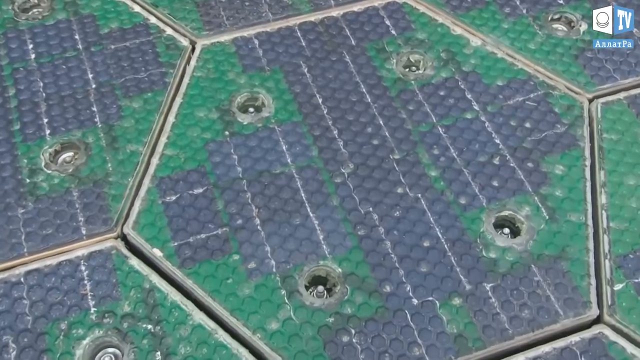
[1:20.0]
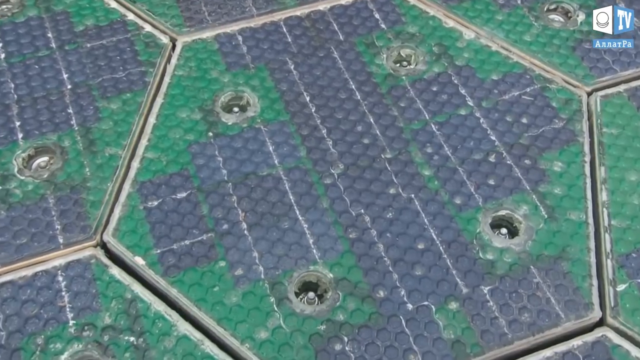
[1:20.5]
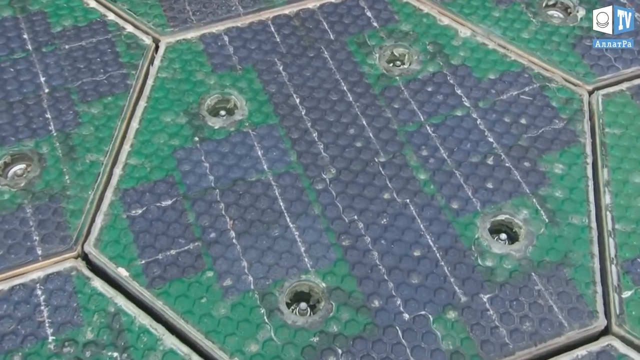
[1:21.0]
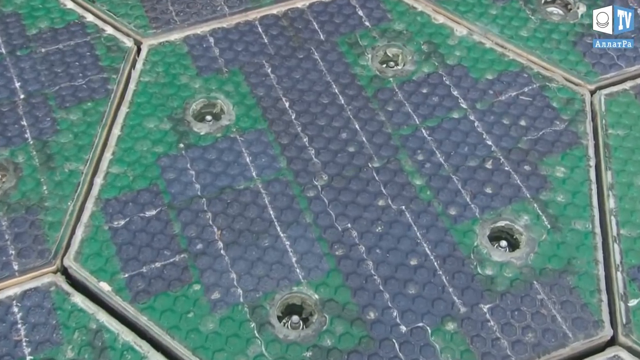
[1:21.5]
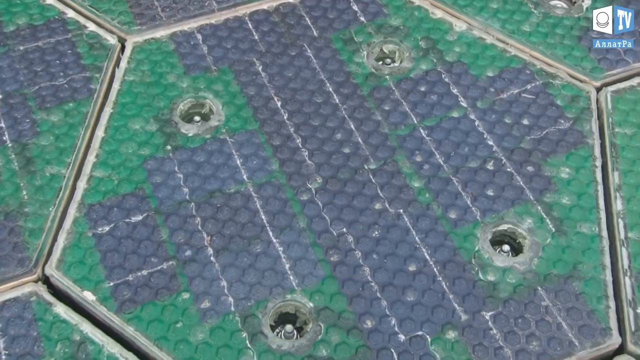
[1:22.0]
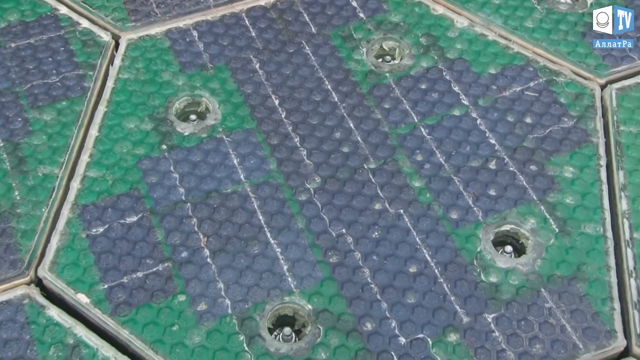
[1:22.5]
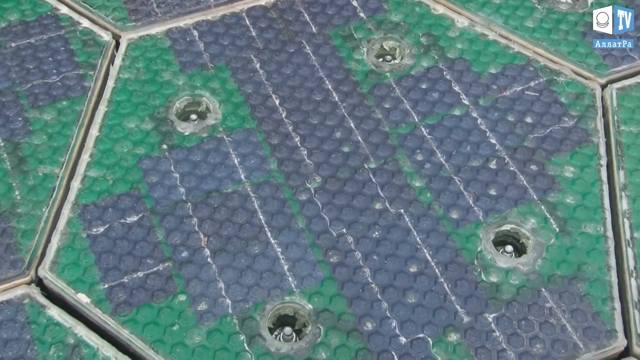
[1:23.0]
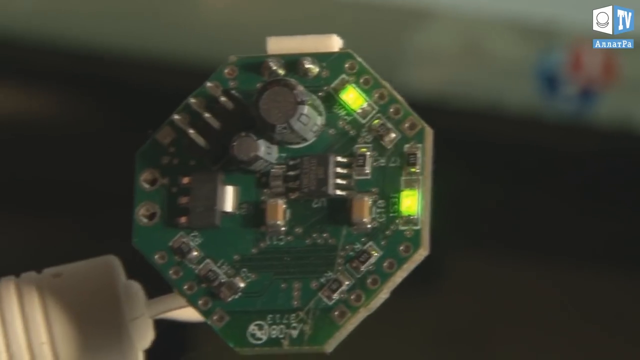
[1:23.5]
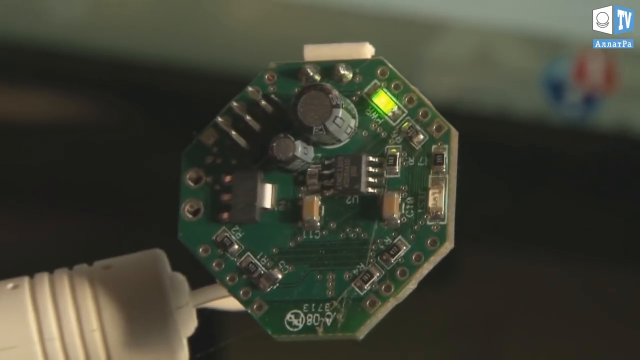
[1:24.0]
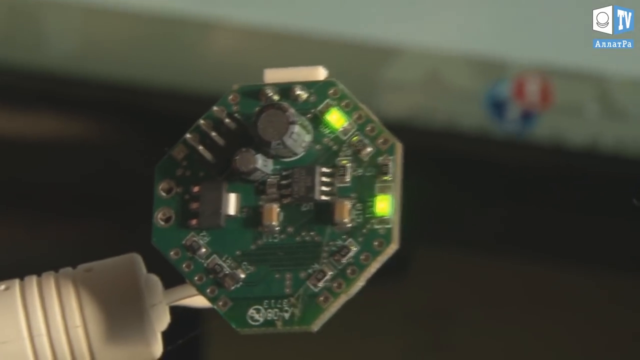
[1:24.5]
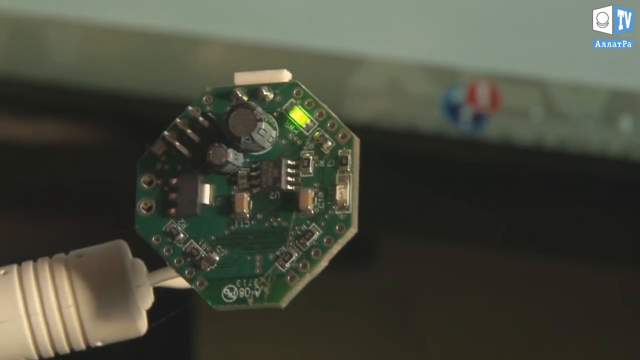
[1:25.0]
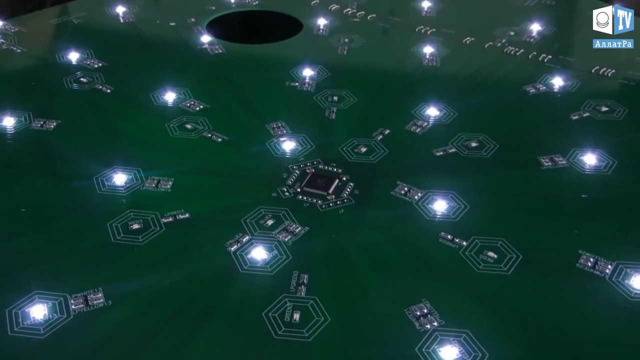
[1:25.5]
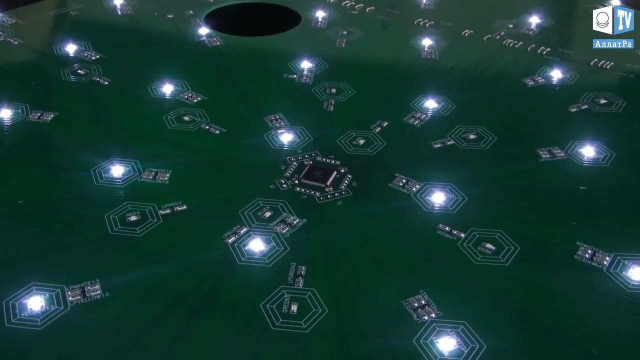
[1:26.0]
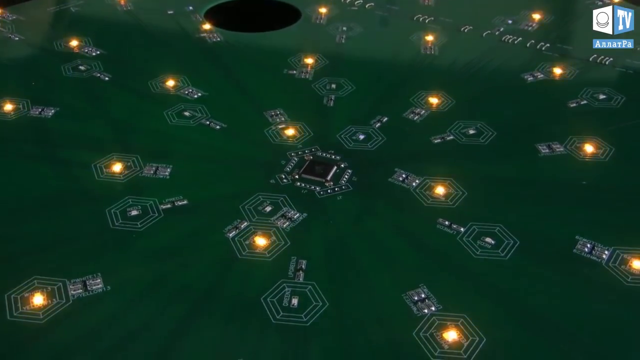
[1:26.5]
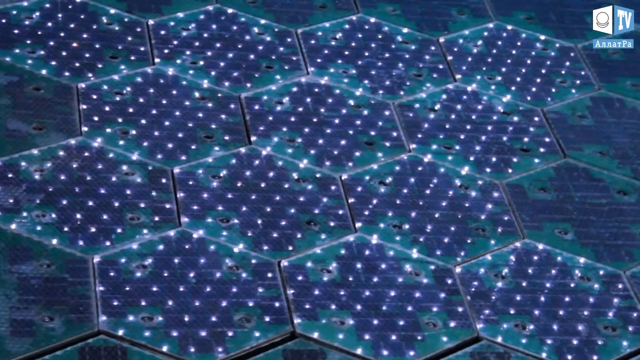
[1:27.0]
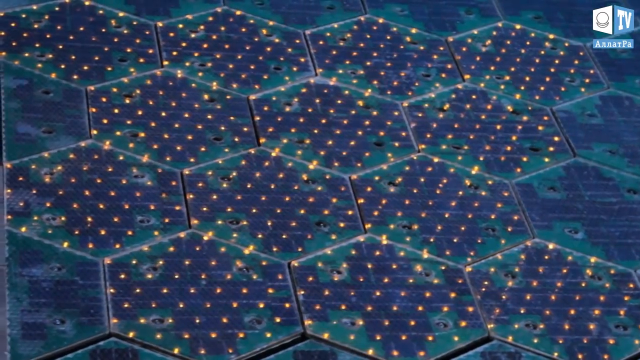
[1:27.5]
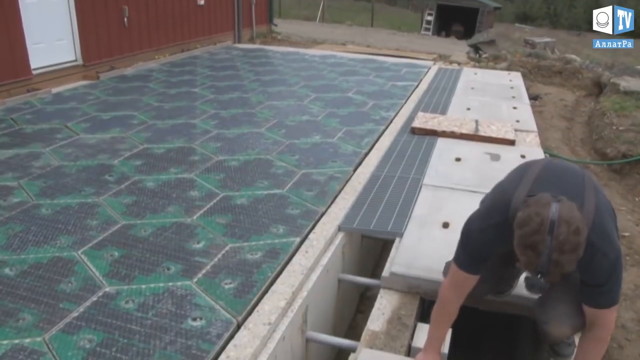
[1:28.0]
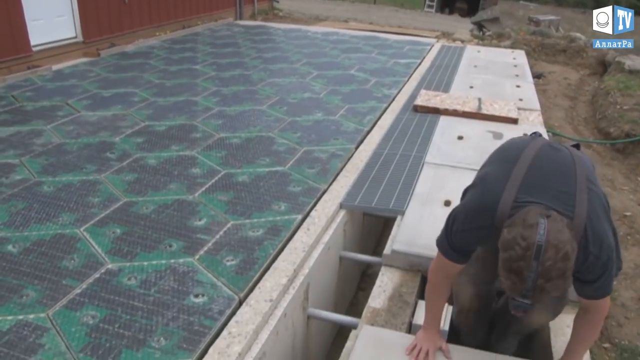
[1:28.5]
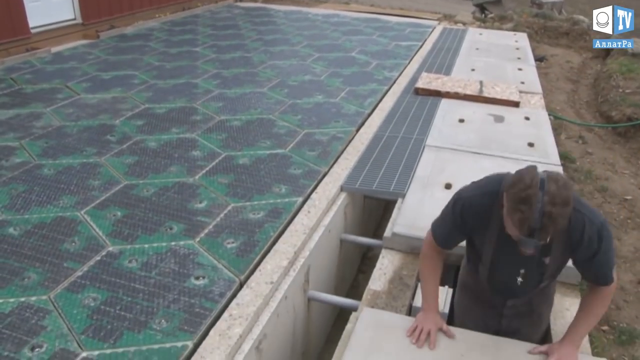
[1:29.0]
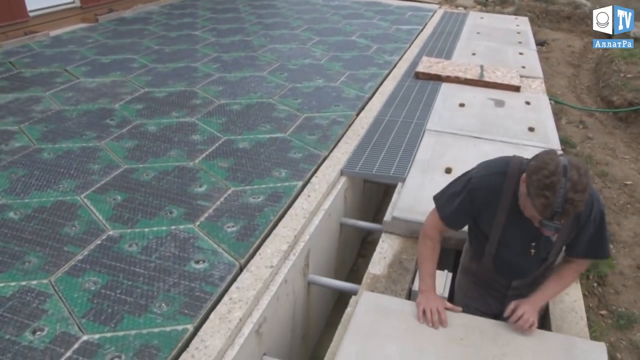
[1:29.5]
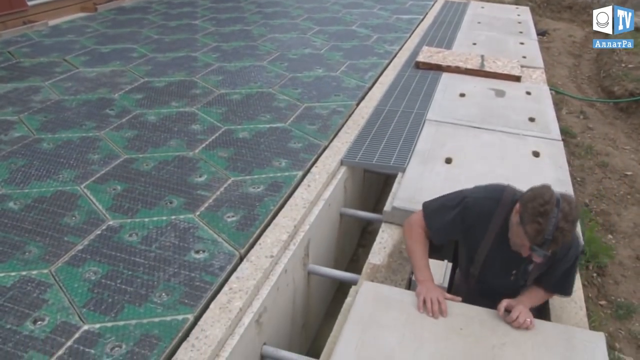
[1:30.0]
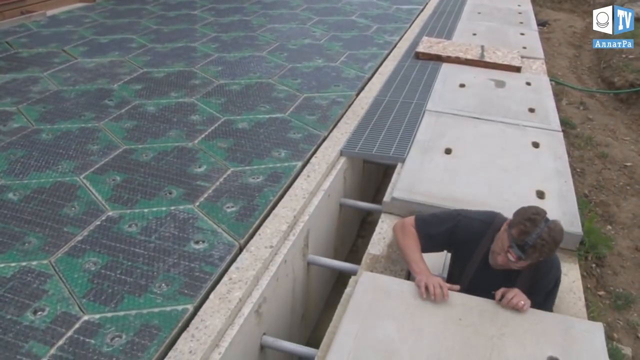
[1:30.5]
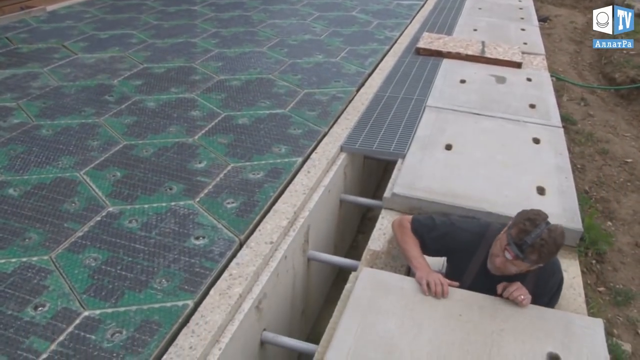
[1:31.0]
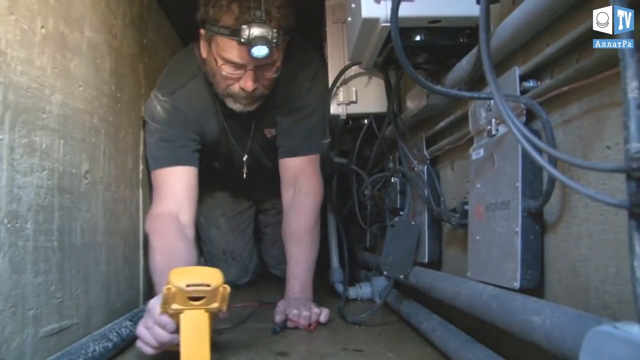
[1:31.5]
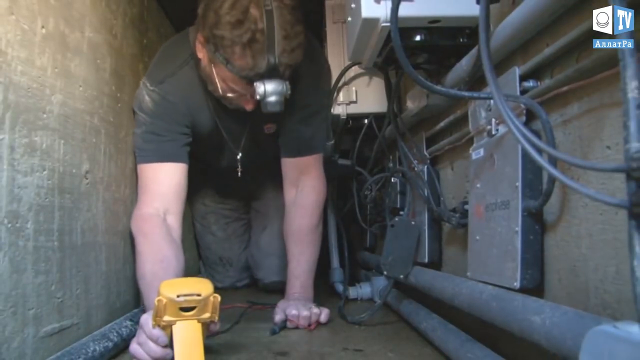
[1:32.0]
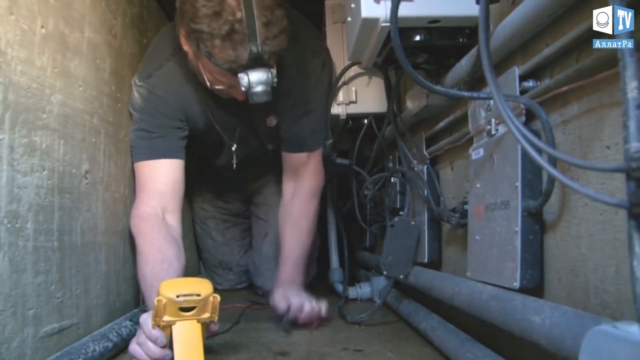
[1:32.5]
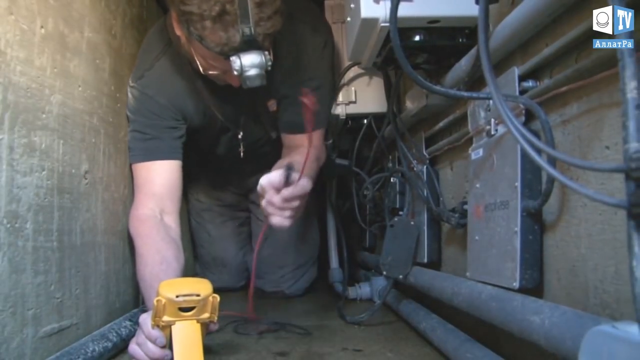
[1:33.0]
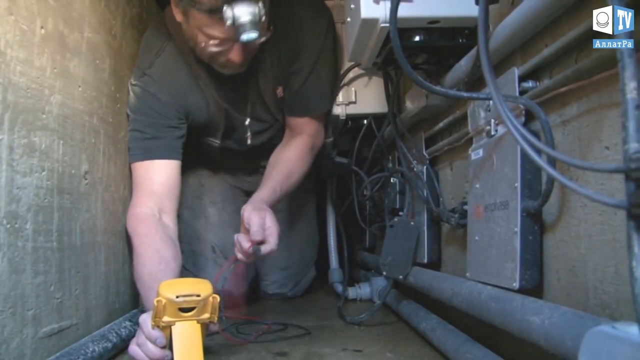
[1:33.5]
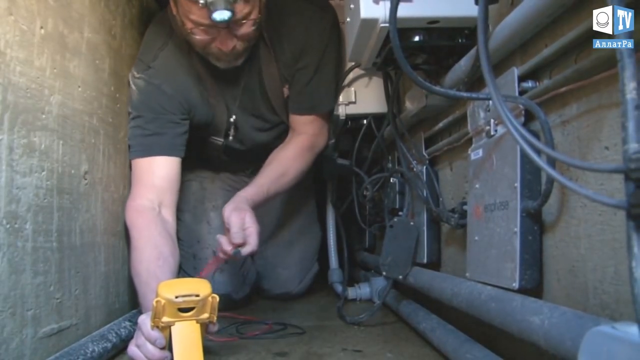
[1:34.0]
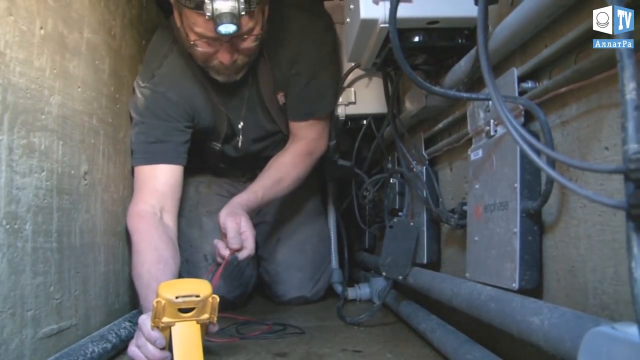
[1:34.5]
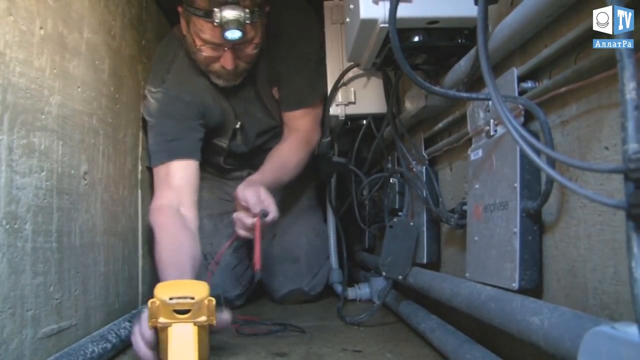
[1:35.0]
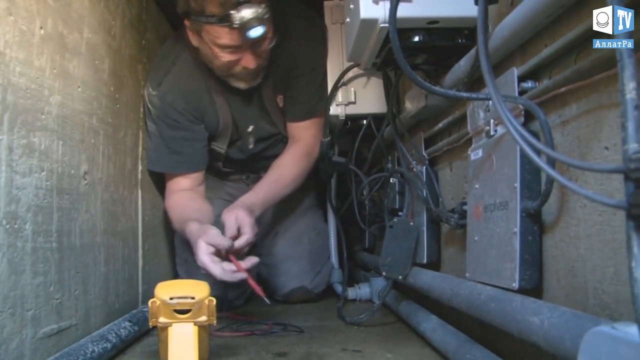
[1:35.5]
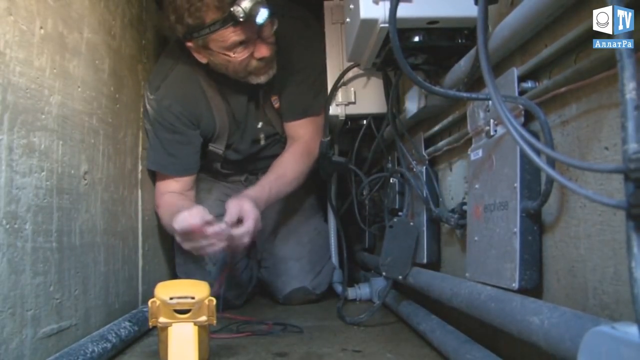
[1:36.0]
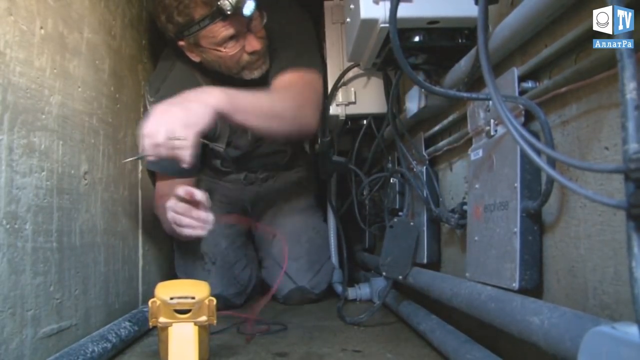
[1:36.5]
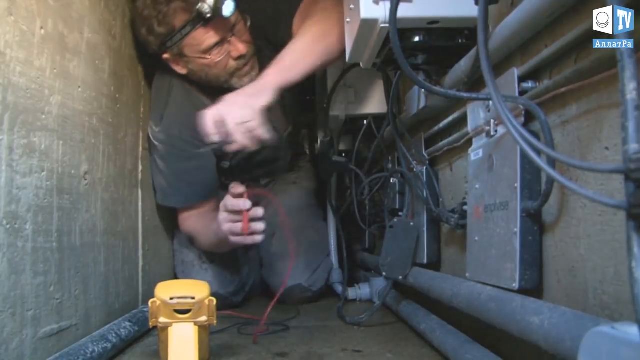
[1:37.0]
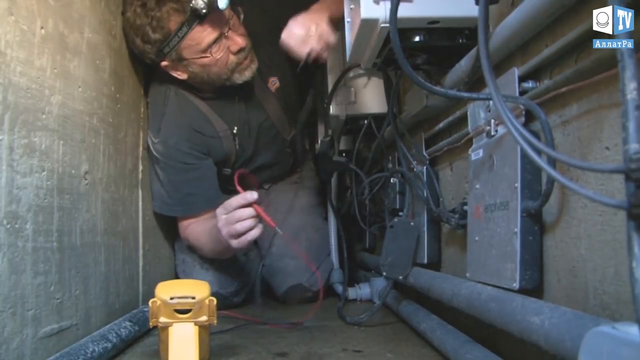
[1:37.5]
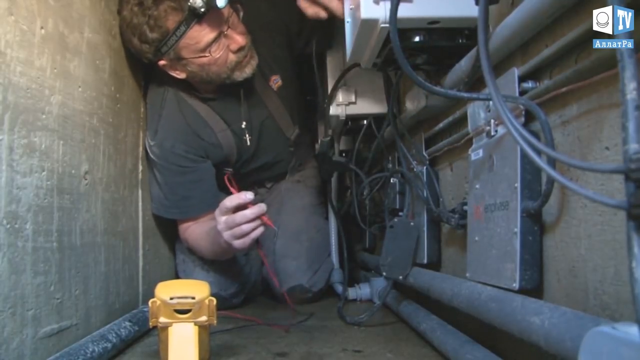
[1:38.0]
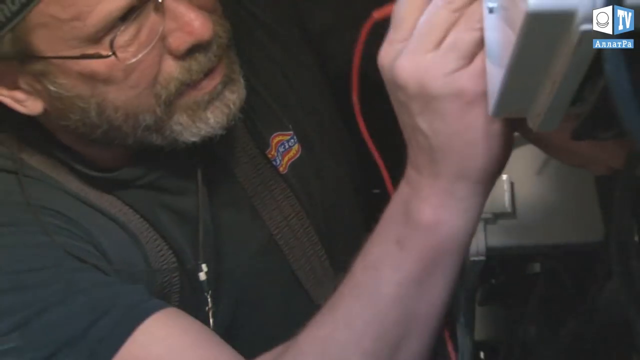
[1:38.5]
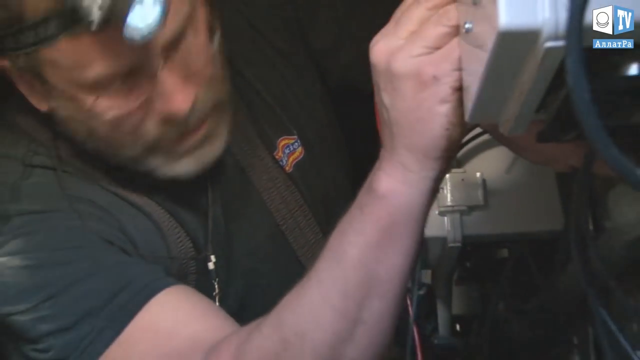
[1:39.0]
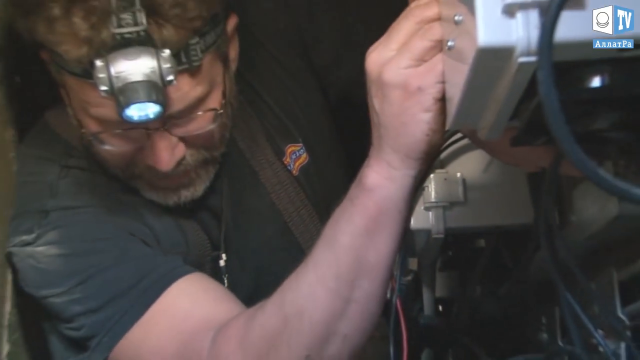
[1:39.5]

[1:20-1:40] The community appears with the blue letters. The man lays the mat down, and text says "install eco raster" with a registered trademark symbol. Two people stand in front of a mat of octagons, with the Rocky Mountains behind them, along with pine trees and a little white fence. A kind of animated city shows a green road with the octagons. Next is something like a garage area with a car hanging out the side, like an alley. The man is then in his office, wearing prescription glasses, a sleeveless tan shirt and a tan hat with black font; he has a tattoo on his left arm and a watch on his left wrist. The background is all white, and it looks like he is in his shop. He makes the octagons, with a bunch of boxes in the background, like his equipment. Another man appears in a white shirt with glasses on his shirt; he has black hair and a black beard, and his shirt says something possibly in a different language. They make the octagons seen laid on the ground, which are also animated in towns on their computer.